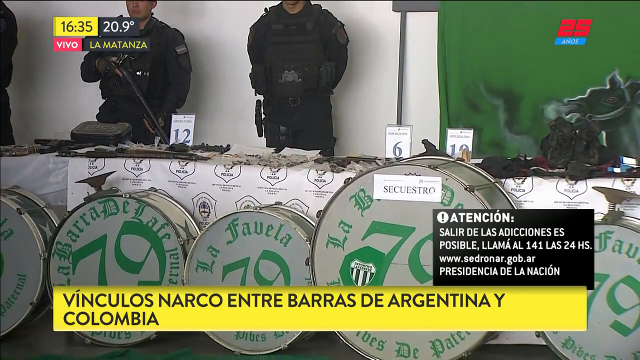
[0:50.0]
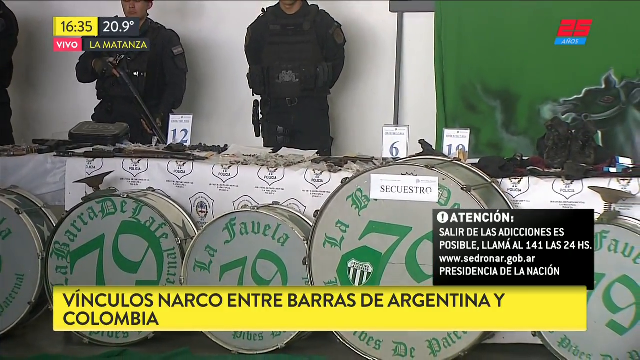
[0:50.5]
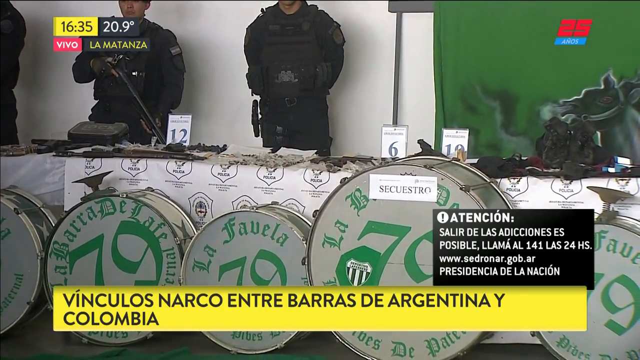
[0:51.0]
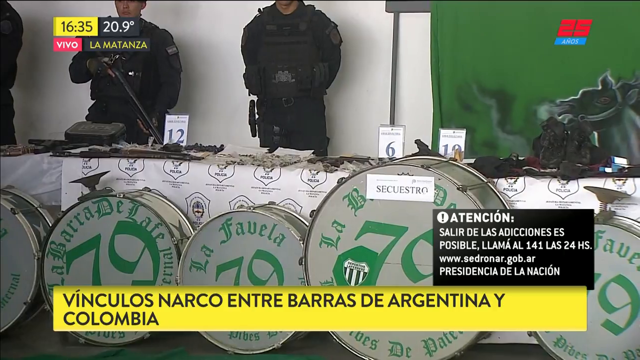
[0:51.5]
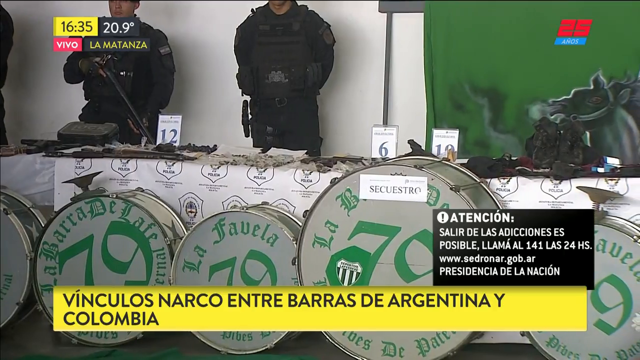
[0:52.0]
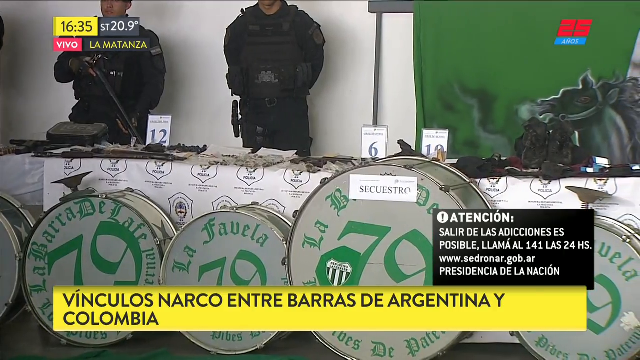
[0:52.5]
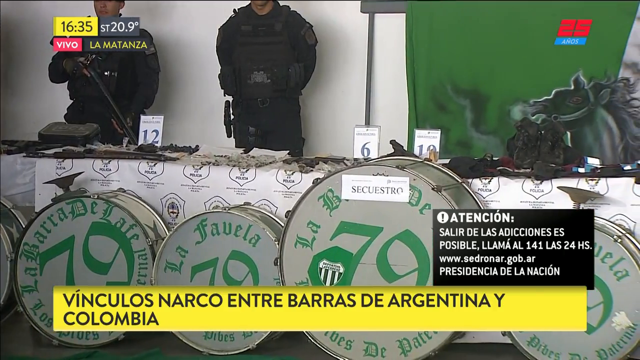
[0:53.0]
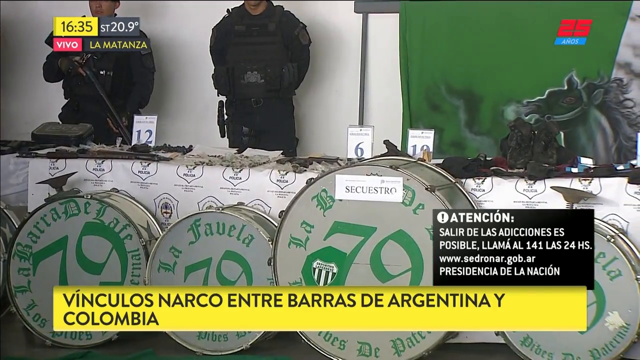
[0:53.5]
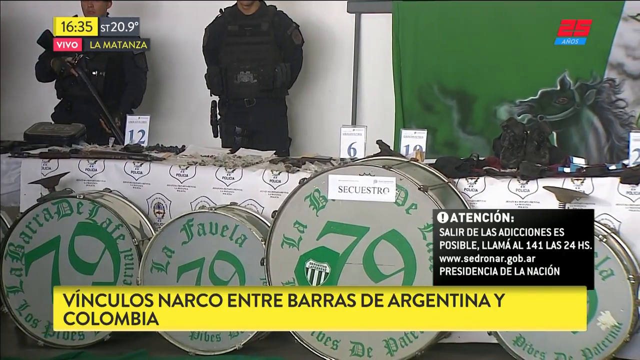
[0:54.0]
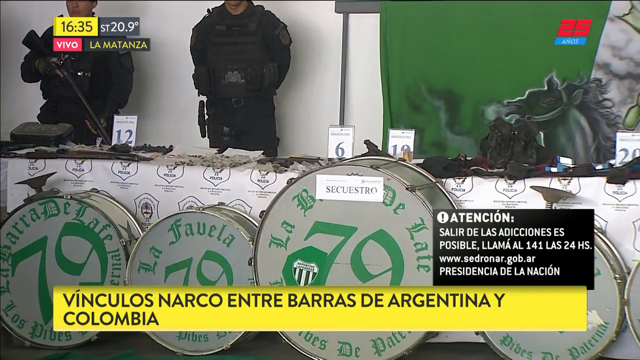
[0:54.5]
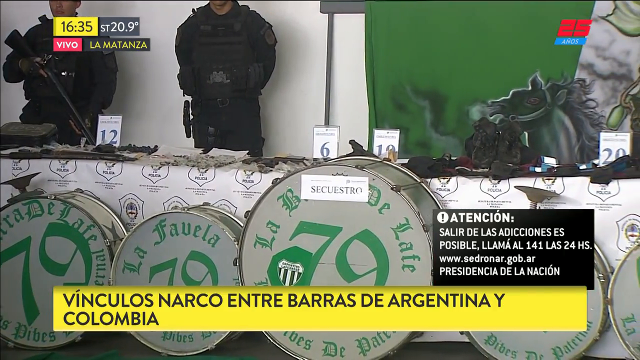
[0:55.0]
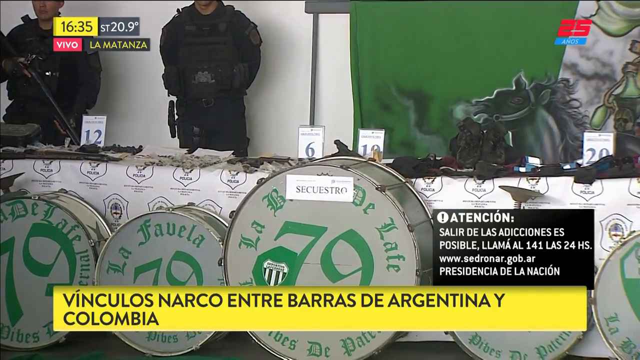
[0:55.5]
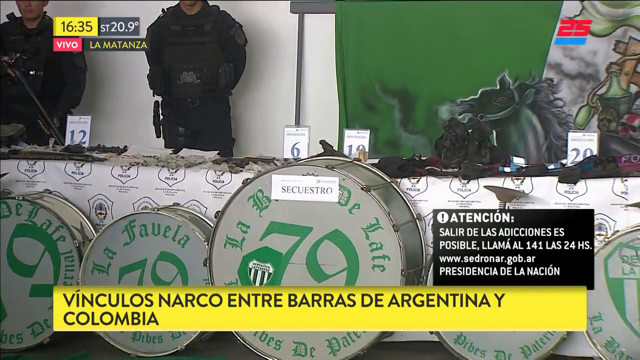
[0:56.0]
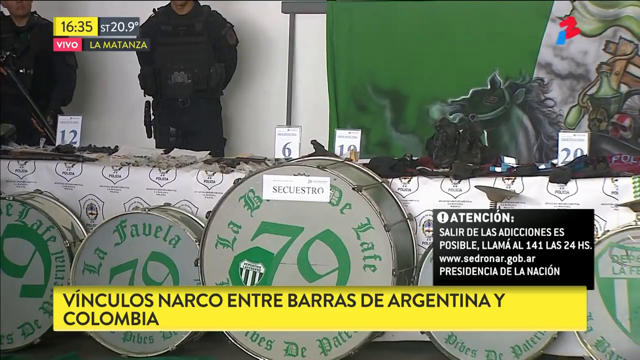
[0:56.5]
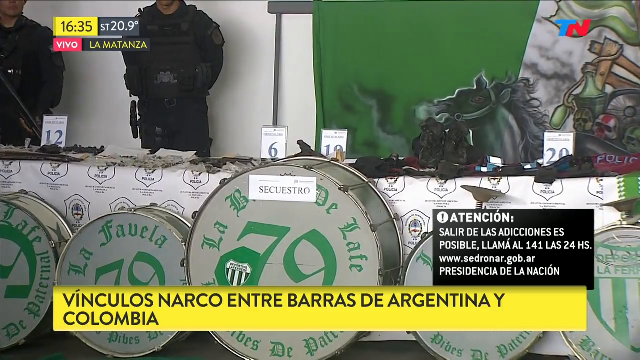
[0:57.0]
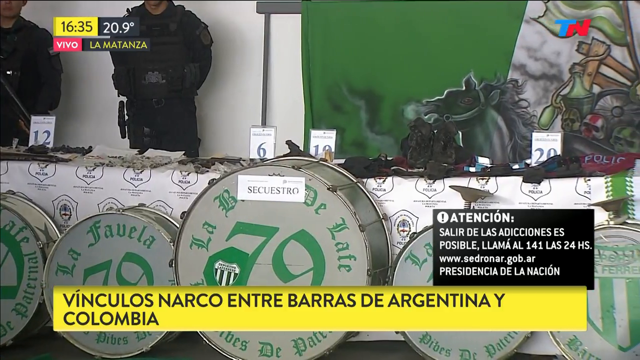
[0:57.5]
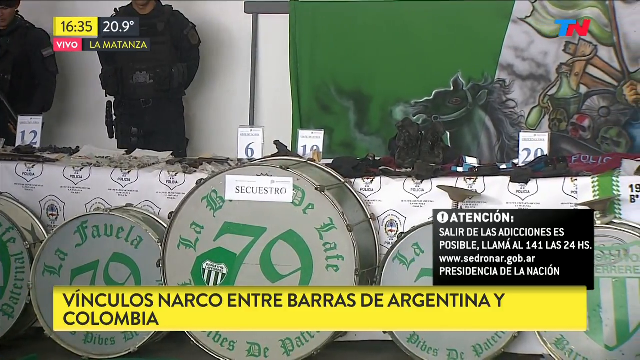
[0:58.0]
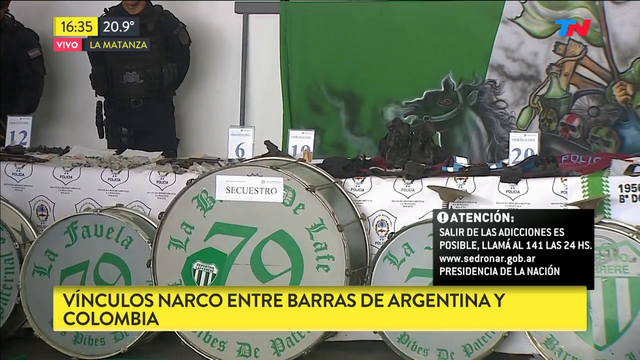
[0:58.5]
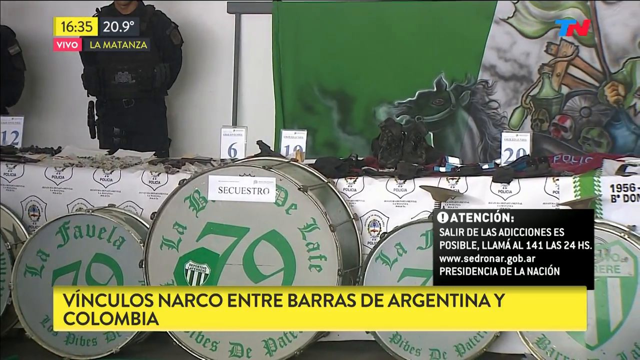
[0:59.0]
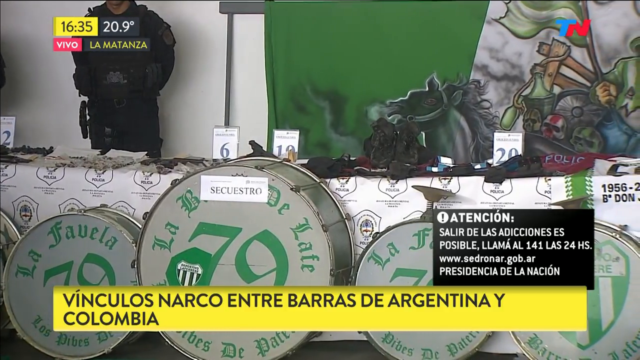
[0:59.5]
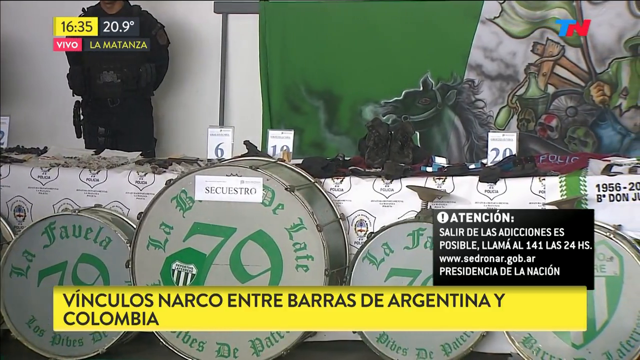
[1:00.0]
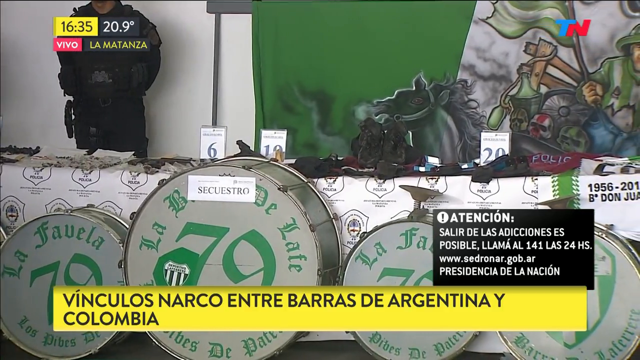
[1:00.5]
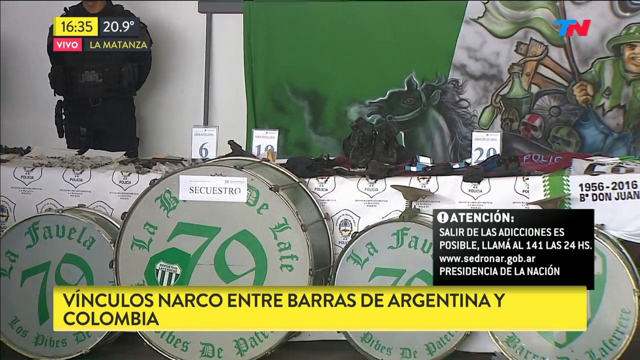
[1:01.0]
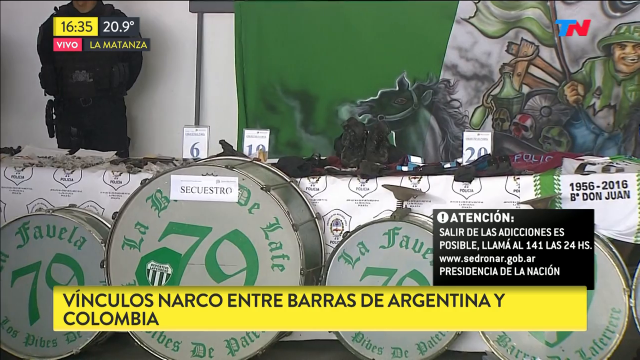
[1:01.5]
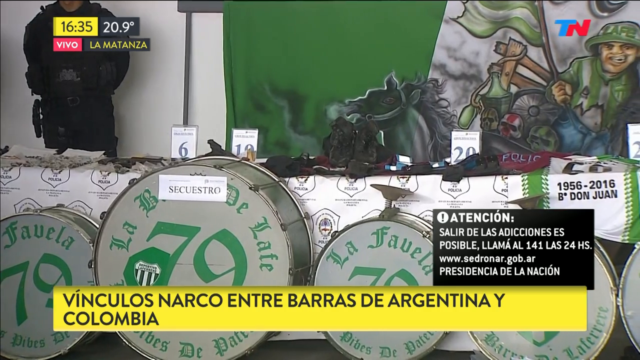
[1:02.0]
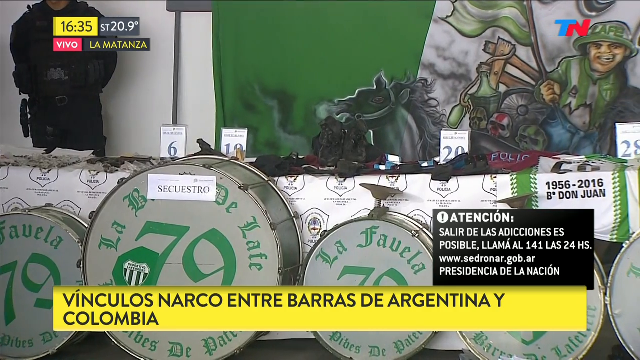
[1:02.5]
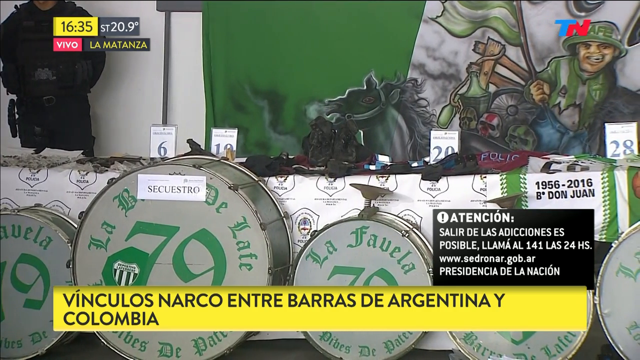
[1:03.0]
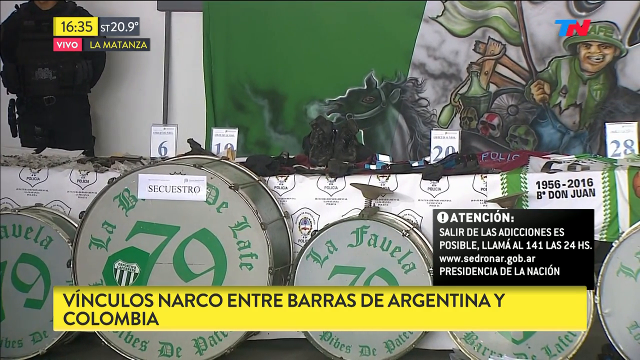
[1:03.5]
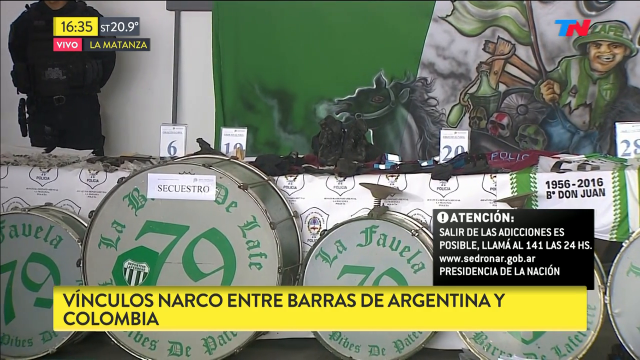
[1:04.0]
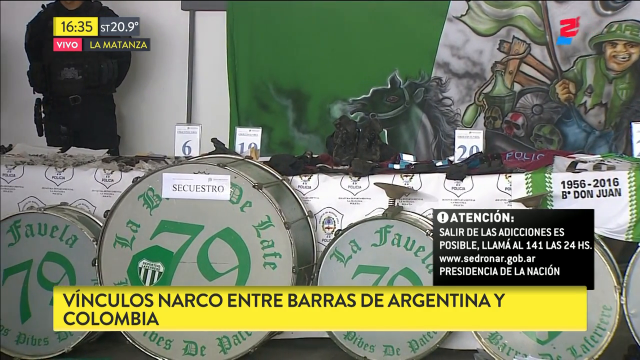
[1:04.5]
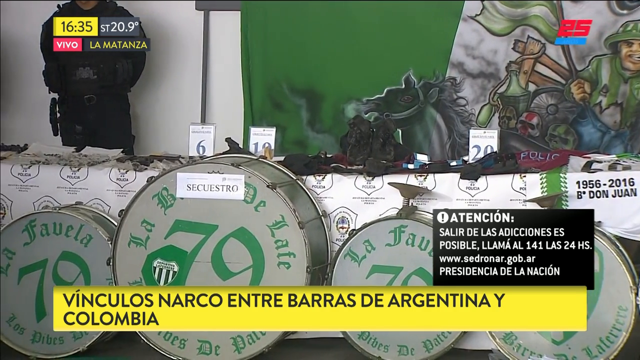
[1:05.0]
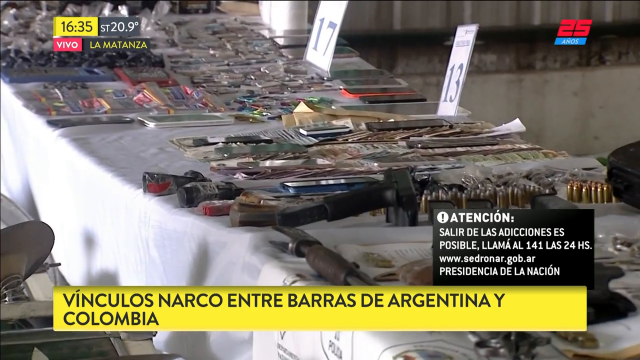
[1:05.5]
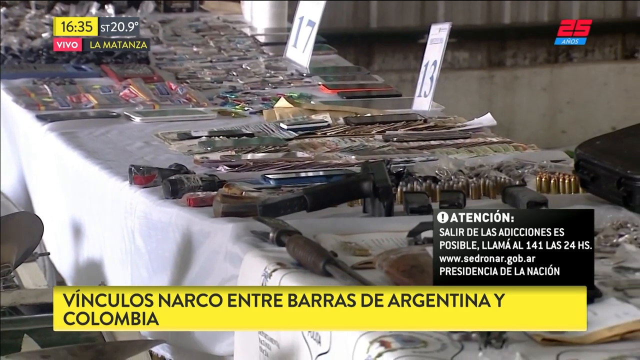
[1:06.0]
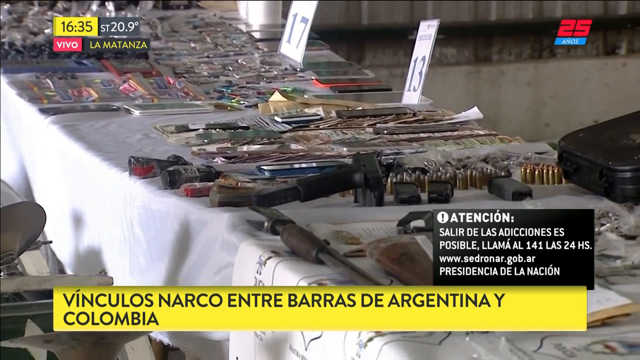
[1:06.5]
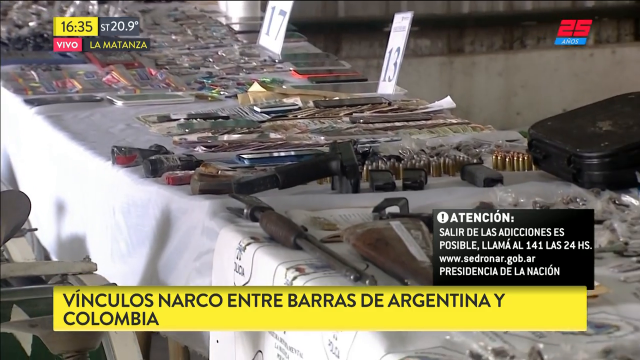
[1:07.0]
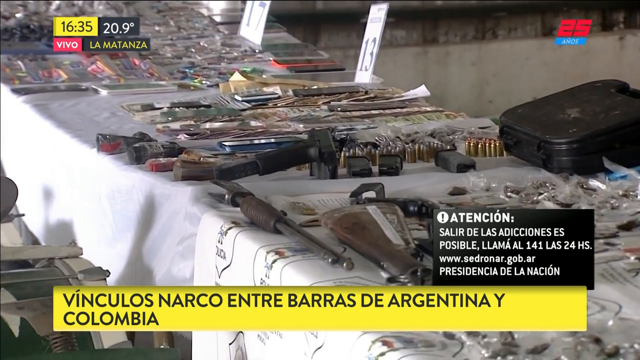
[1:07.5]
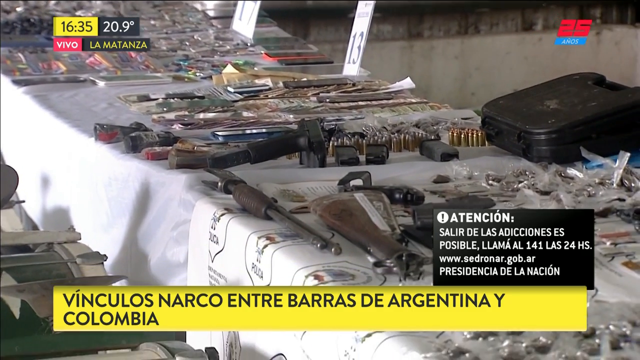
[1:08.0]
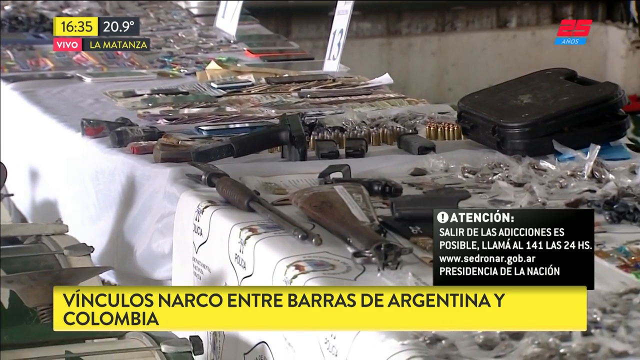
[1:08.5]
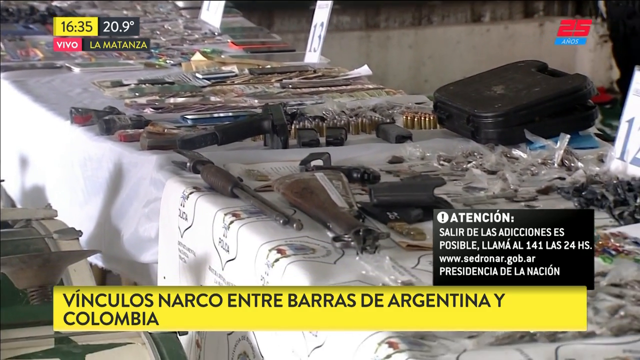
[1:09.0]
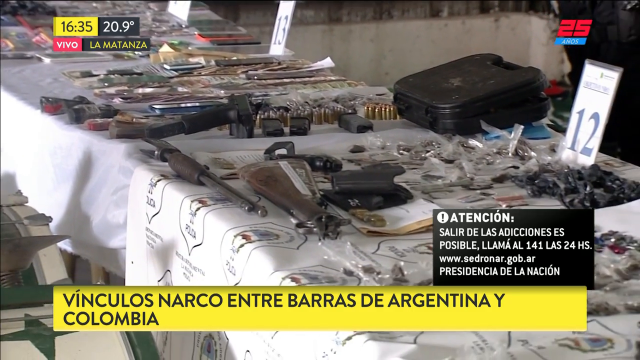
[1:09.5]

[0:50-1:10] The camera moves in for a closer view of the small things on the table. Behind the table stand almost five armed, uniformed officers in black uniforms; they look almost the same height and remain steady without moving. Across the table are things like banners and panels, maybe gold, keys, and many other small items. Across the lower screen is a bright yellow strip with black text, and above it a caption in a white-over-black box warns viewers with "attention", also in another language. A digital clock on the left shows the time and temperature, and a small red box is marked "VIVO", apparently indicating the TN broadcast is live.